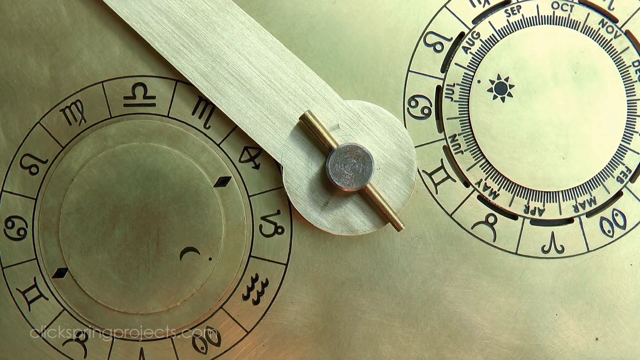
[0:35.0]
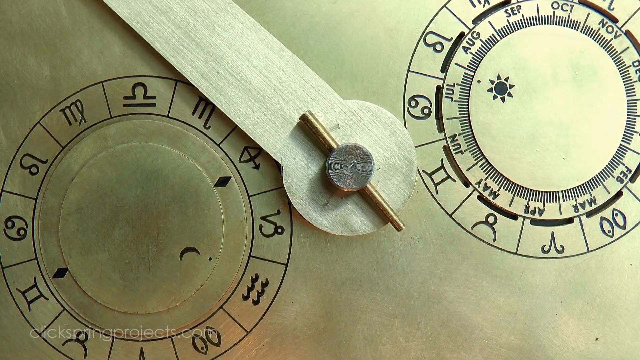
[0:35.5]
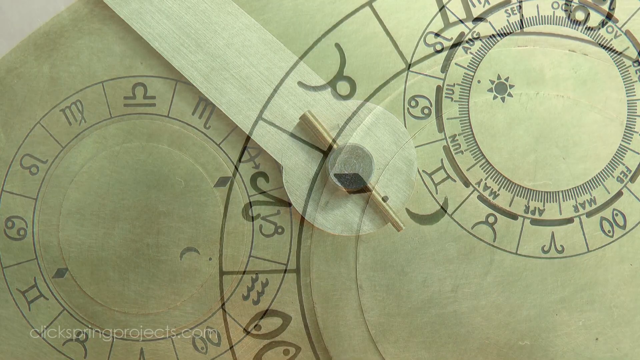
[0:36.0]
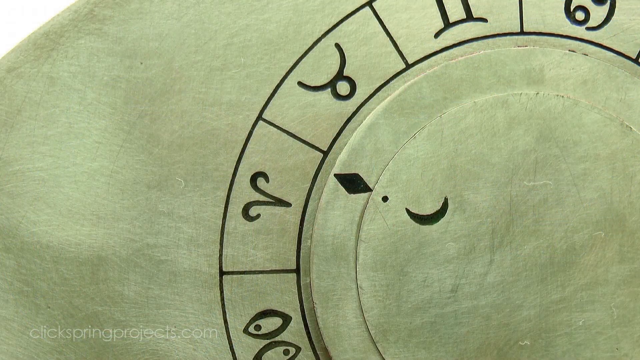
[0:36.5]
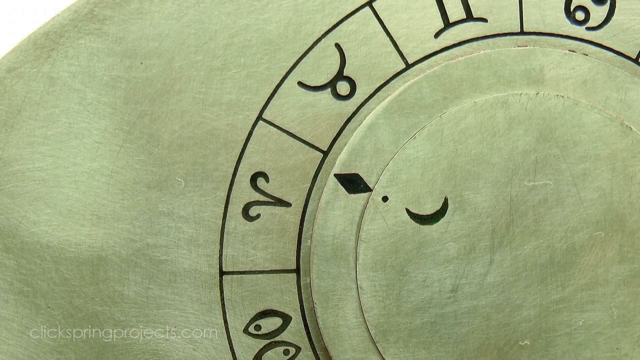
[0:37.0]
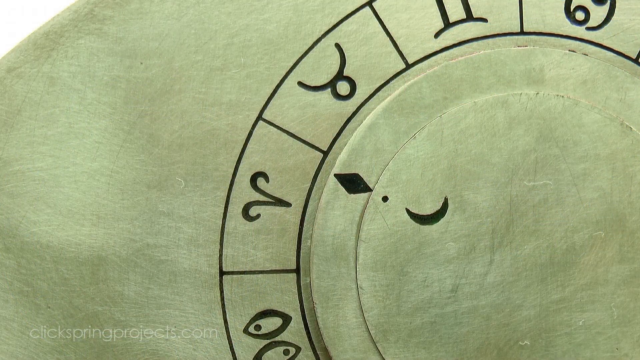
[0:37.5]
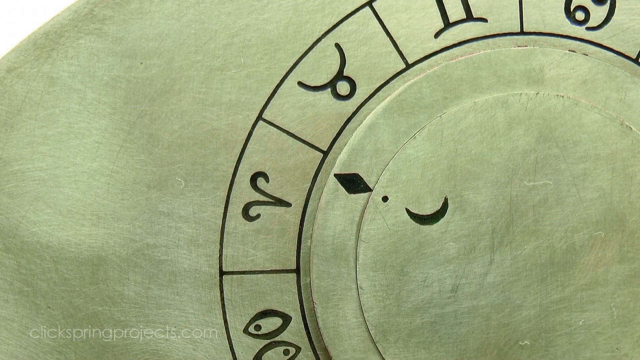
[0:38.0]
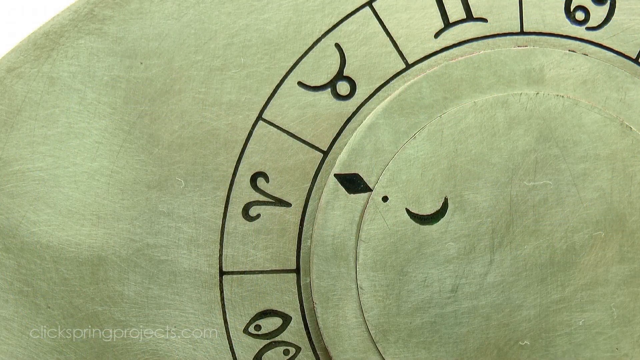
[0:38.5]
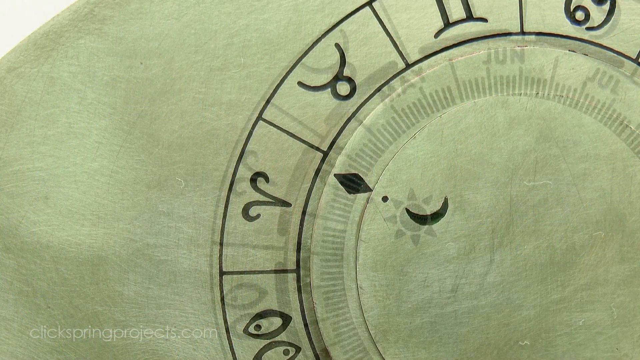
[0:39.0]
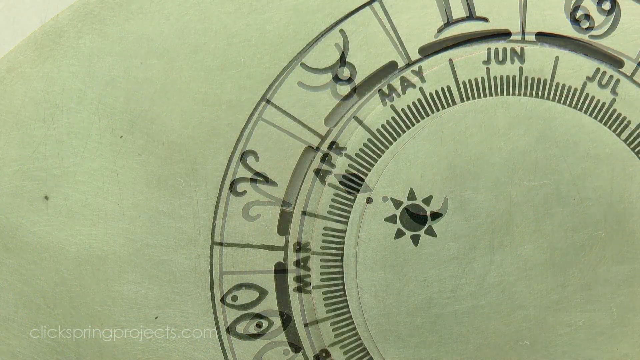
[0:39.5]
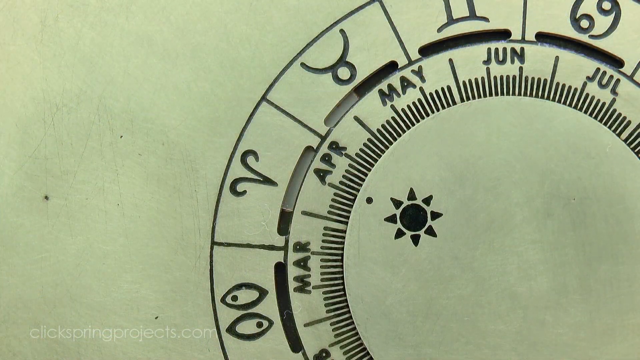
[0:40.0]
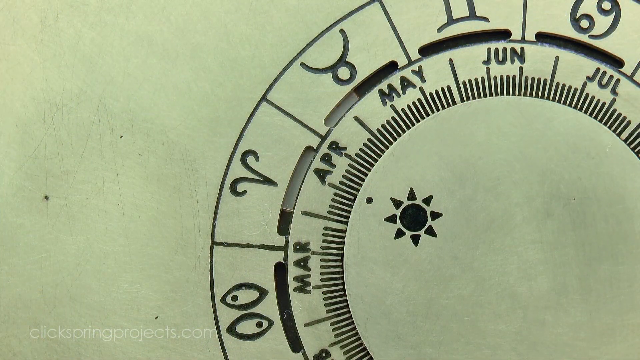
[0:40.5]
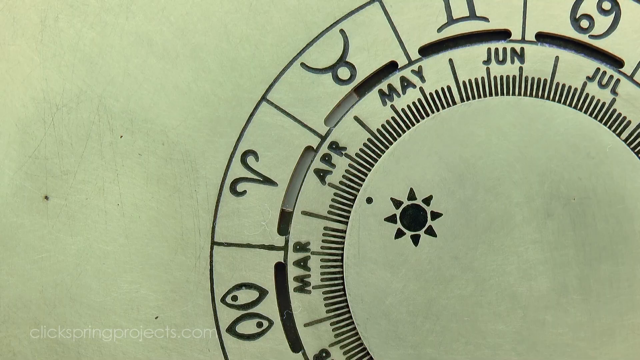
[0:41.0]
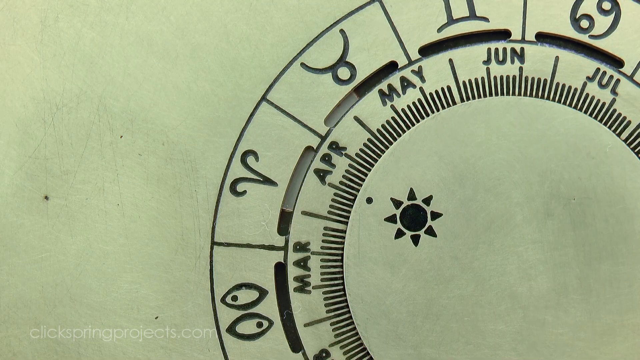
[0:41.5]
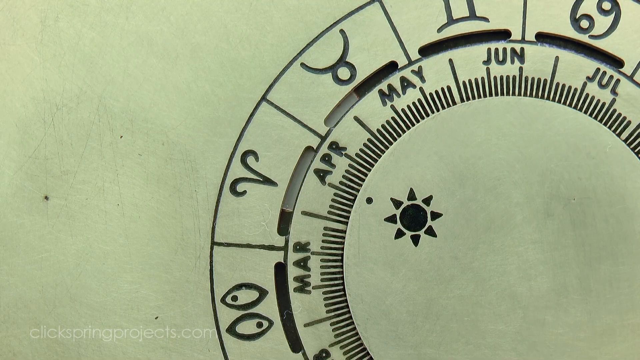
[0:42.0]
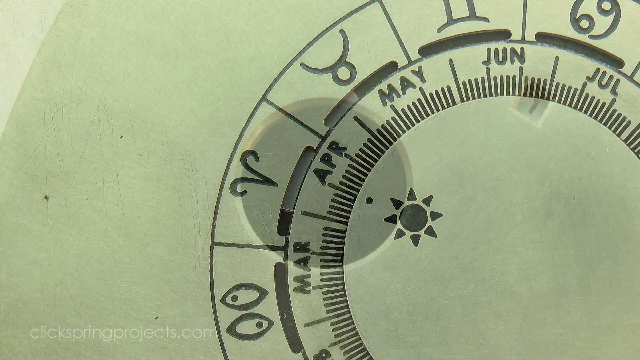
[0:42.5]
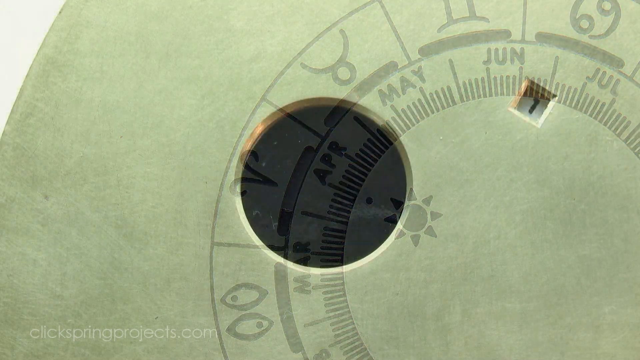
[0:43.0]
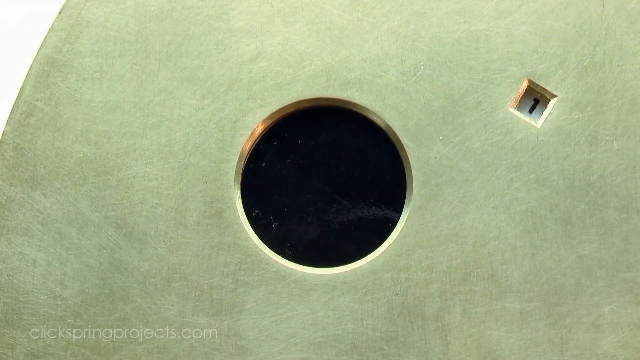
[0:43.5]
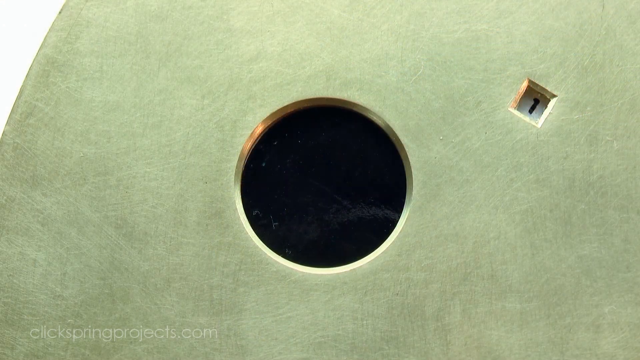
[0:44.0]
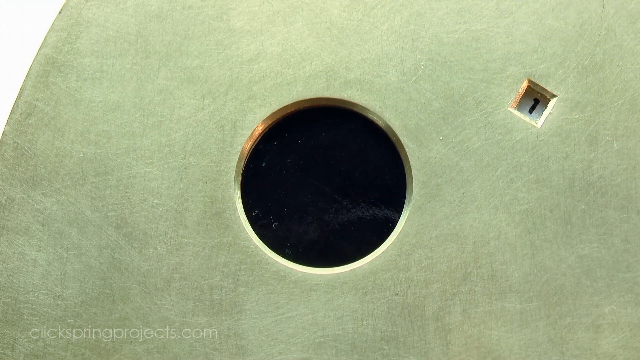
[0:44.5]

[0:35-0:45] A close-up shows the back of the gold sundial, with the moon aspect very close and symbols going around in a circle; as it turns, the symbols on the outside are all different. The view cuts to the sun symbol at the center with symbols around it, along with the months of March, April, May, June and July and different lines possibly indicating the days within those months, all on the gold sundial. Then a black circle appears, perhaps showing the full phase of the moon.